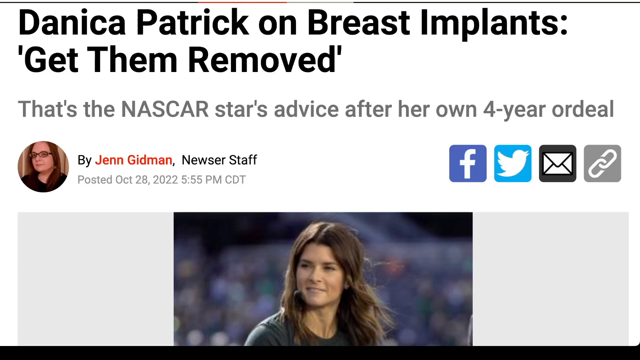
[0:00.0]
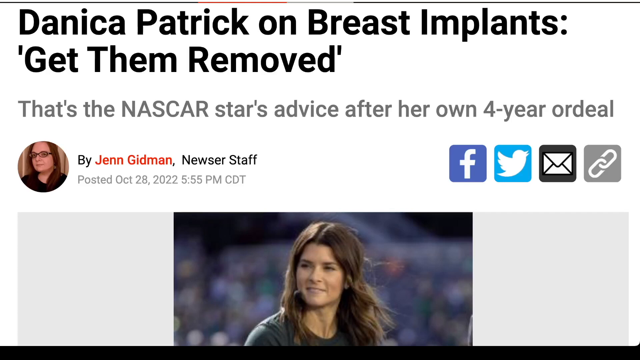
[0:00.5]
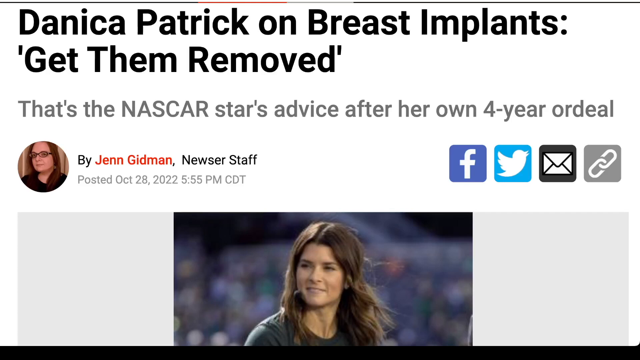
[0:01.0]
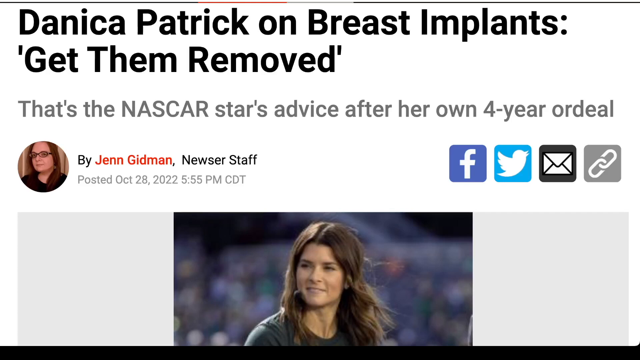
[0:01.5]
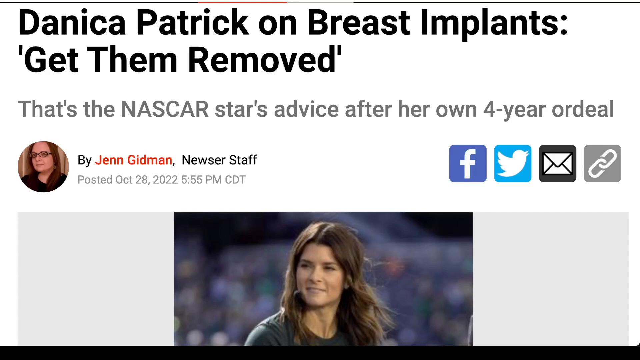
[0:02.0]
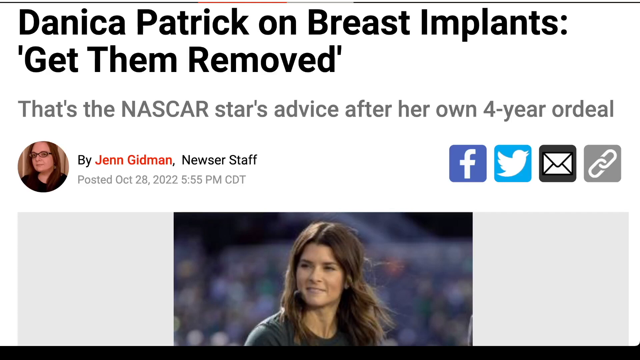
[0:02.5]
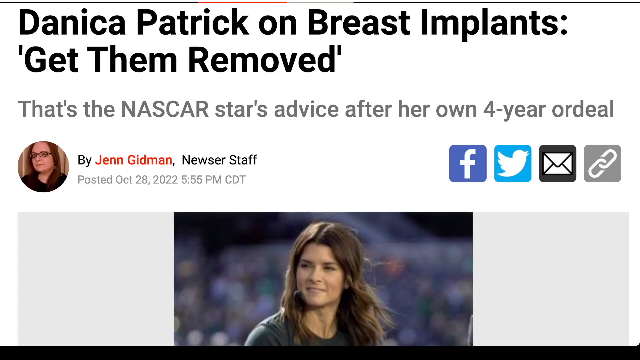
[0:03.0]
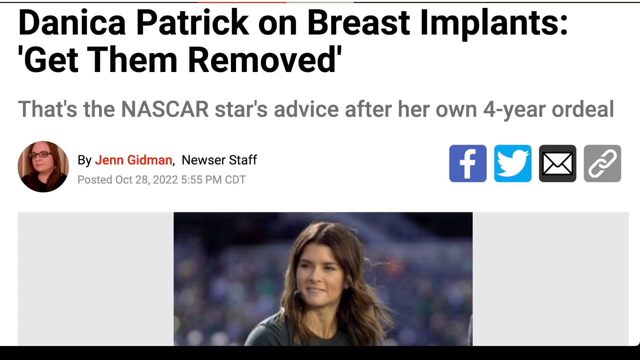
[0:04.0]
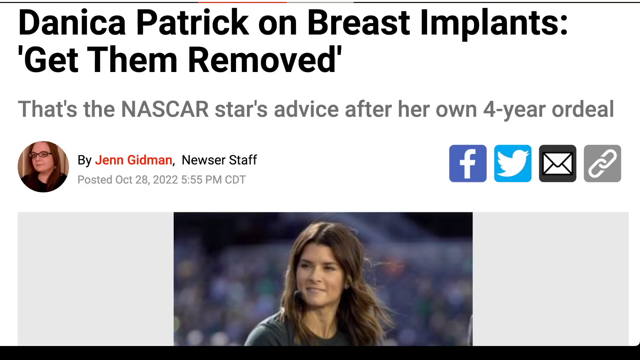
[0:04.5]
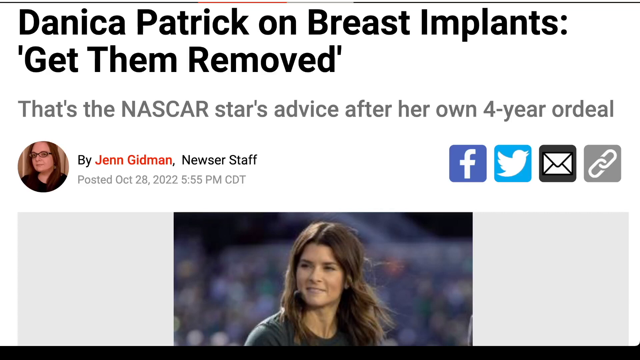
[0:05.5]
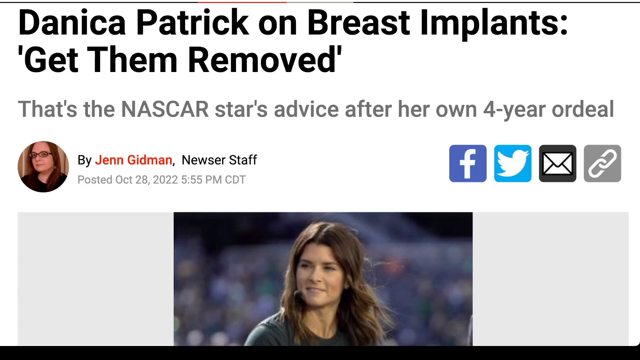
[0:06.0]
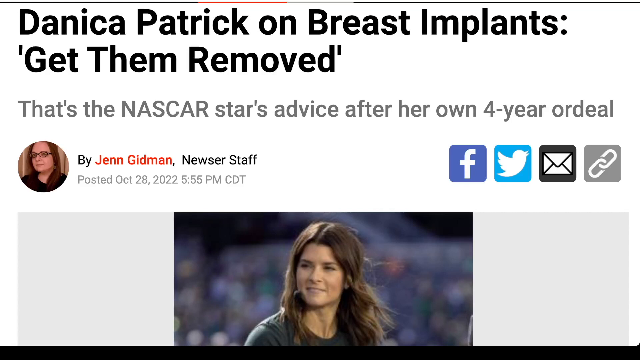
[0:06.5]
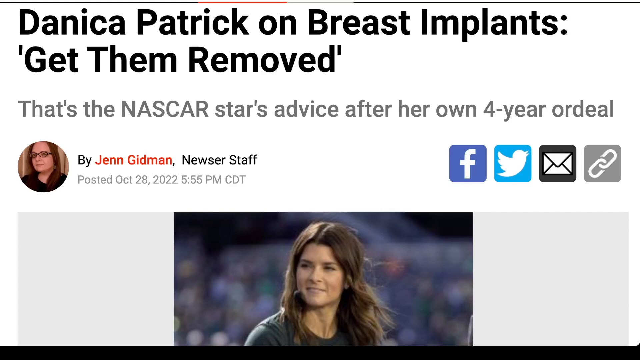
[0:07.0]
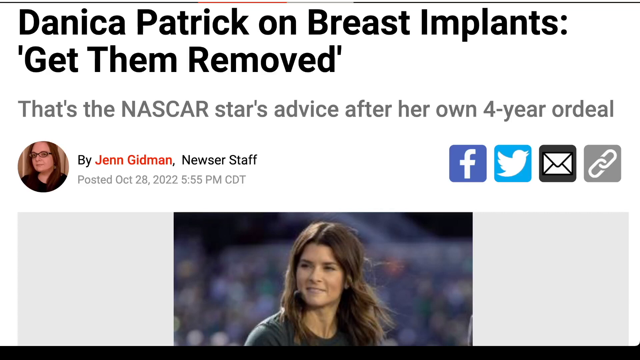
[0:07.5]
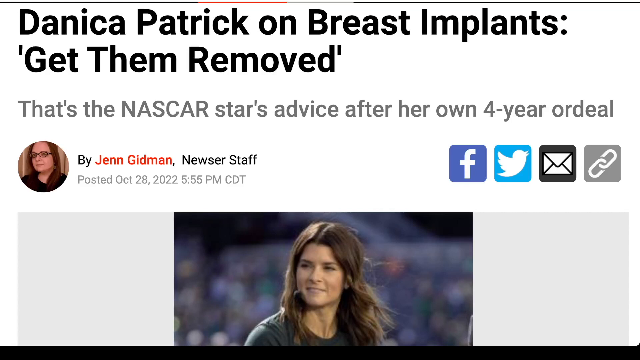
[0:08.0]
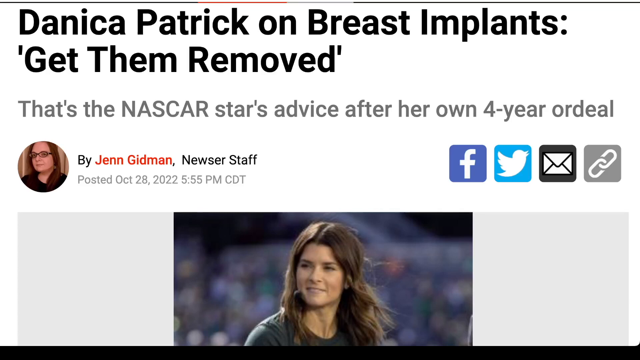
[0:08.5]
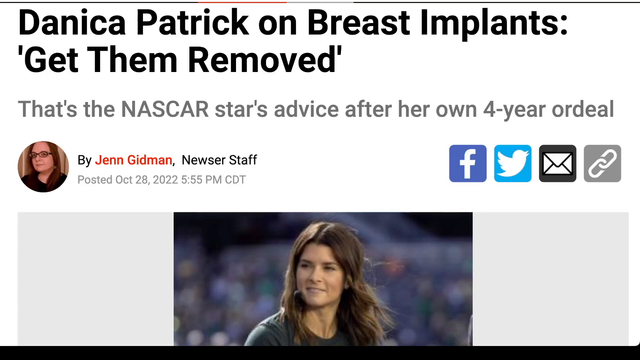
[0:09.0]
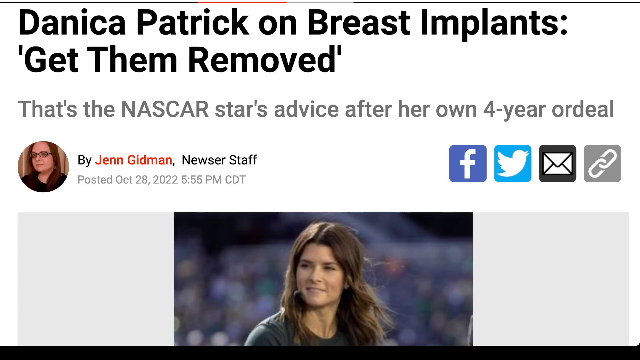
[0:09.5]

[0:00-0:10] A snapshot of an article about Danica Patrick appears. The headline reads "Danica Patrick on breast implants. Get them removed." Underneath it says "that's the NASCAR star's advice after her own four-year ordeal." The article is by Jen Gidman, and her bio underneath reads "Newser staff." Below that is "posted October 28th, 2025 at 5 p.m." On the left side of the image is a small circular avatar picture of Jen: a white woman with glasses and red hair, wearing a black blouse or at least a dress shirt. Across from that section, on the right side of the frame, is a series of social media links: Facebook, Twitter, then apparently an envelope for an email link, and apparently a copy-link symbol. The image stays static and nothing changes.